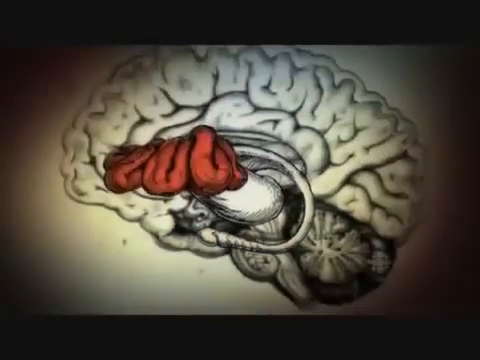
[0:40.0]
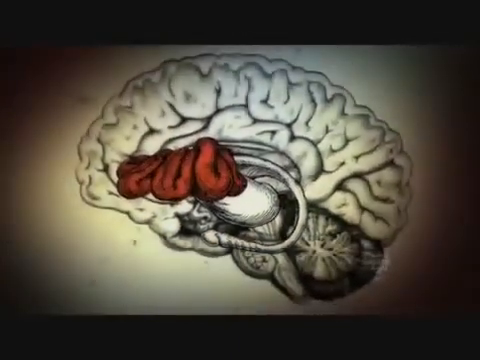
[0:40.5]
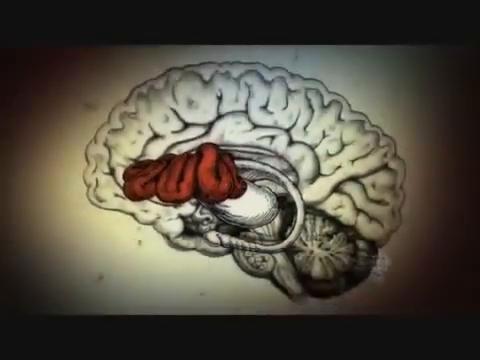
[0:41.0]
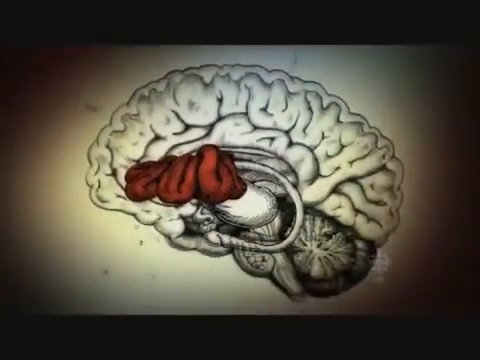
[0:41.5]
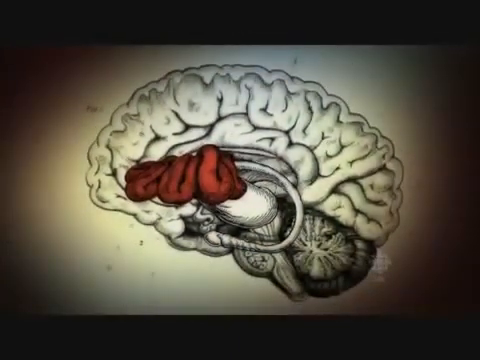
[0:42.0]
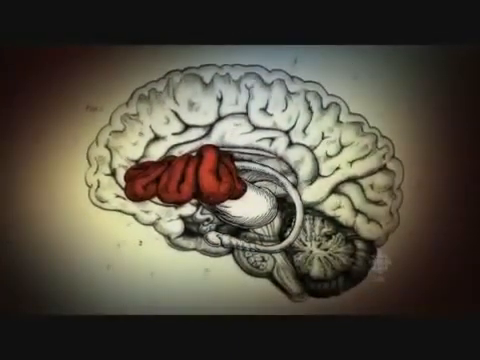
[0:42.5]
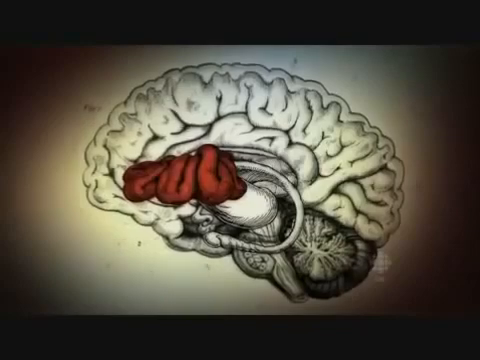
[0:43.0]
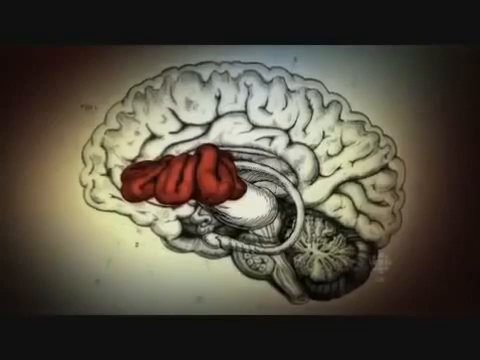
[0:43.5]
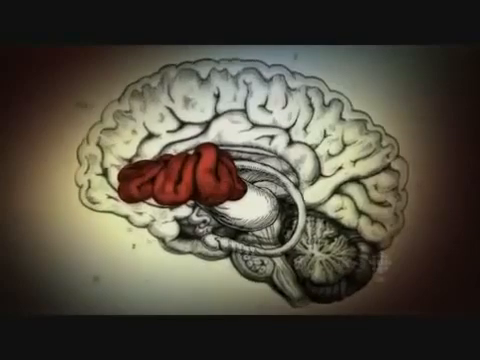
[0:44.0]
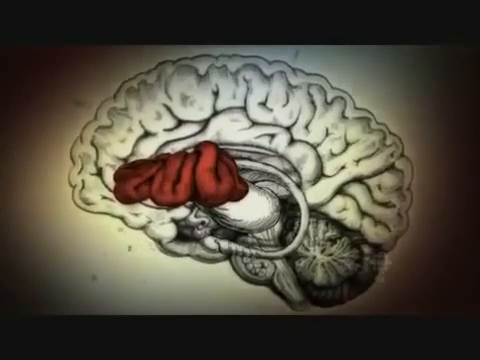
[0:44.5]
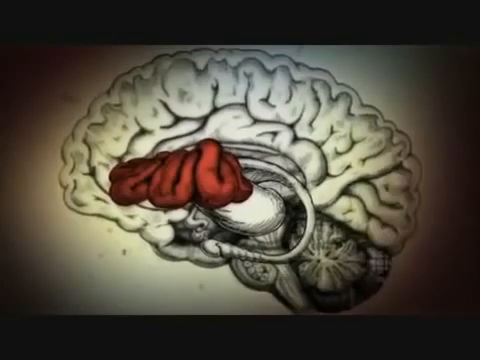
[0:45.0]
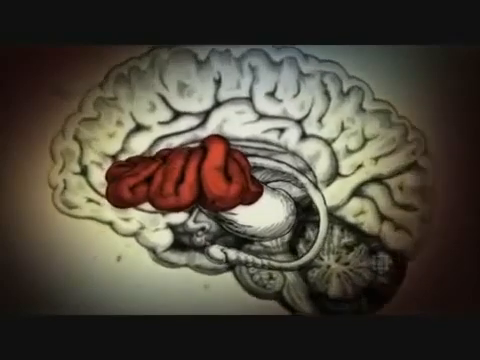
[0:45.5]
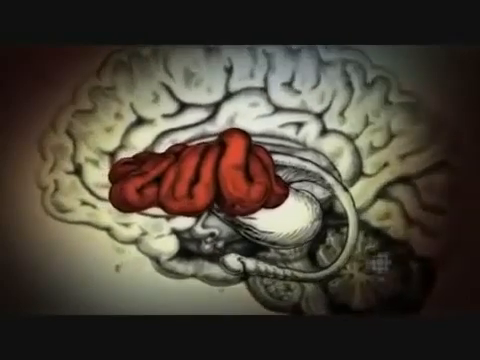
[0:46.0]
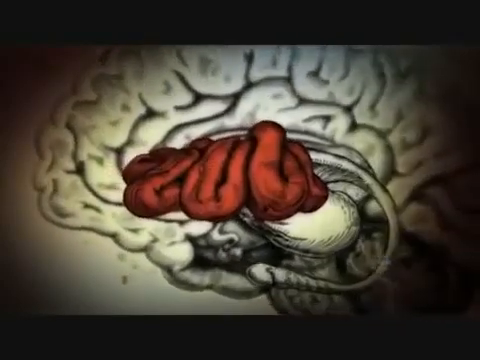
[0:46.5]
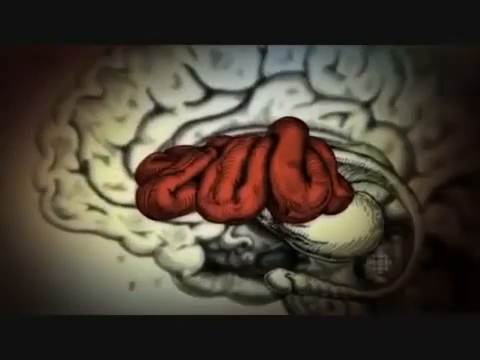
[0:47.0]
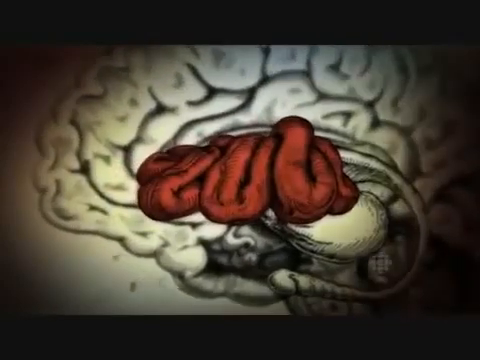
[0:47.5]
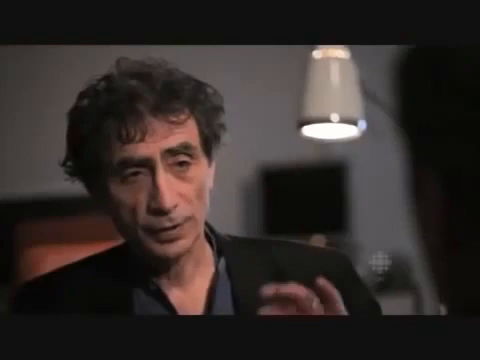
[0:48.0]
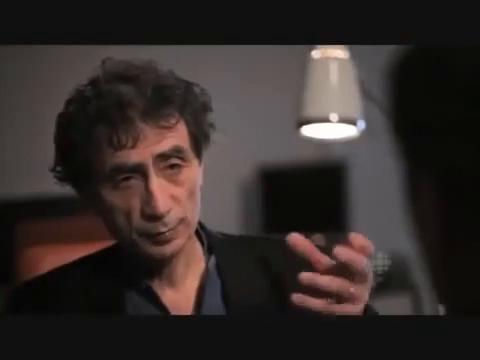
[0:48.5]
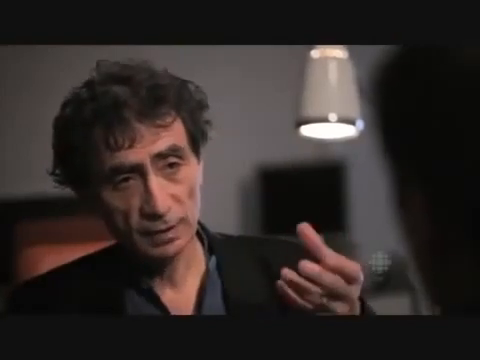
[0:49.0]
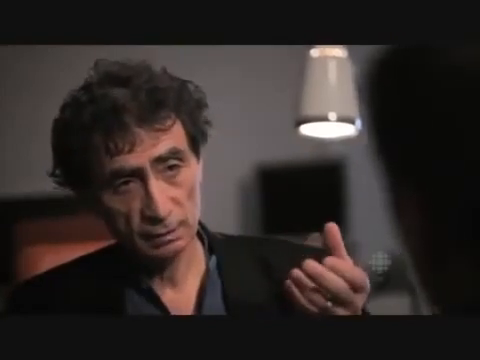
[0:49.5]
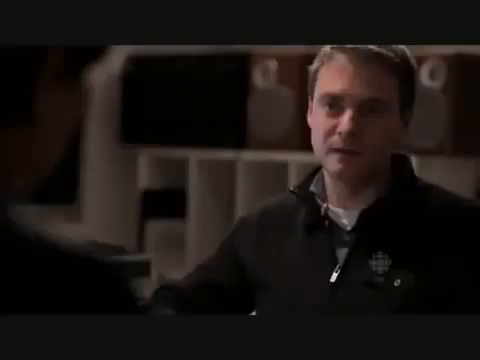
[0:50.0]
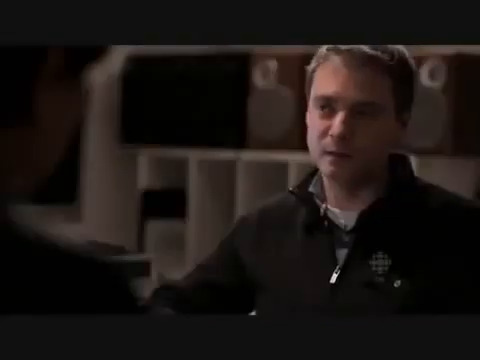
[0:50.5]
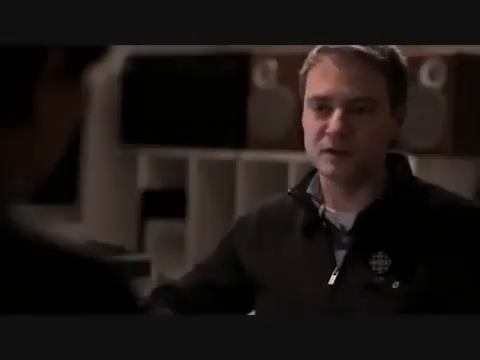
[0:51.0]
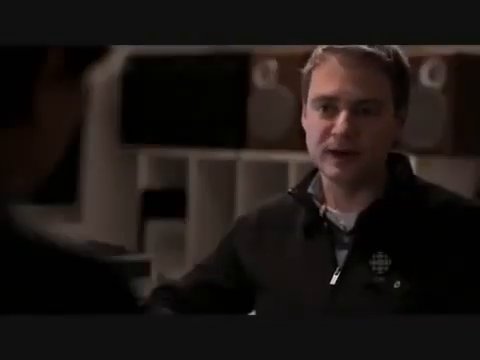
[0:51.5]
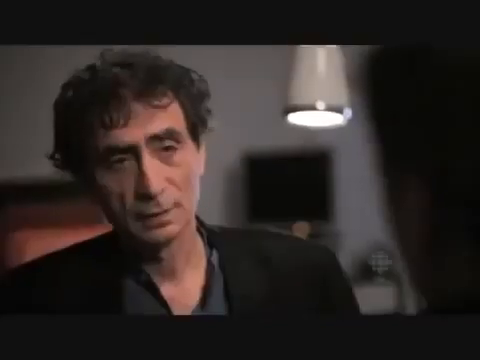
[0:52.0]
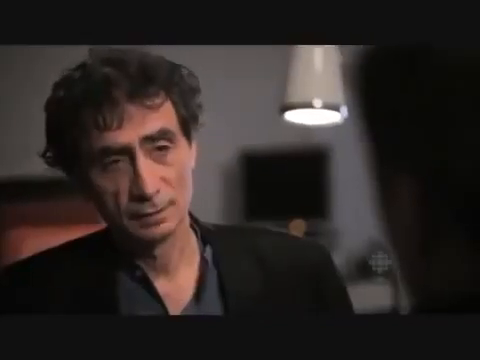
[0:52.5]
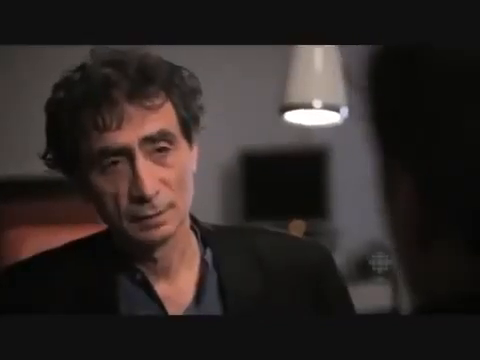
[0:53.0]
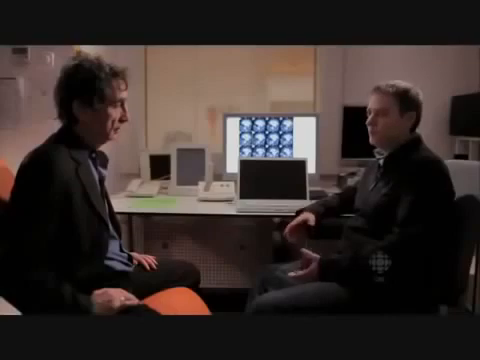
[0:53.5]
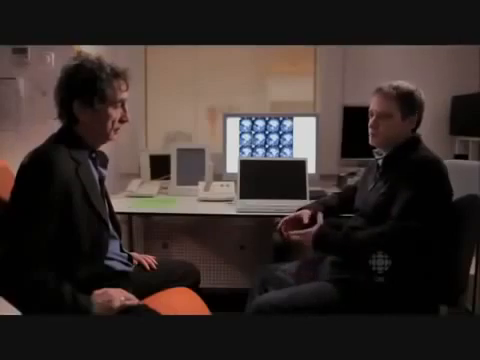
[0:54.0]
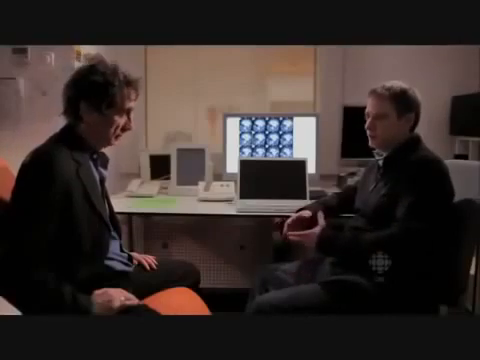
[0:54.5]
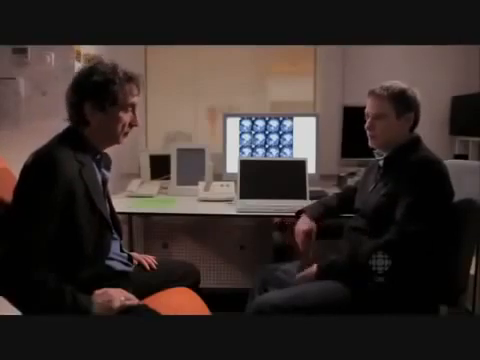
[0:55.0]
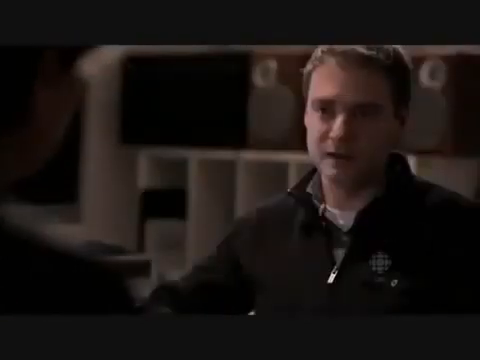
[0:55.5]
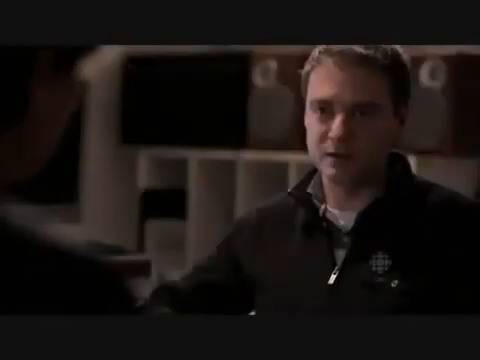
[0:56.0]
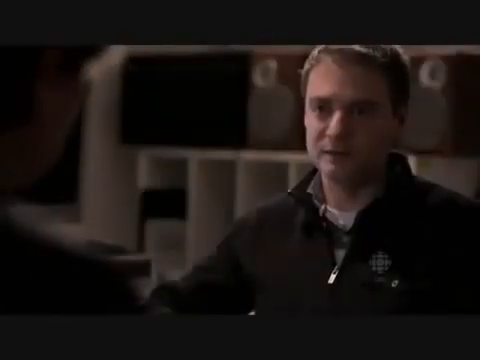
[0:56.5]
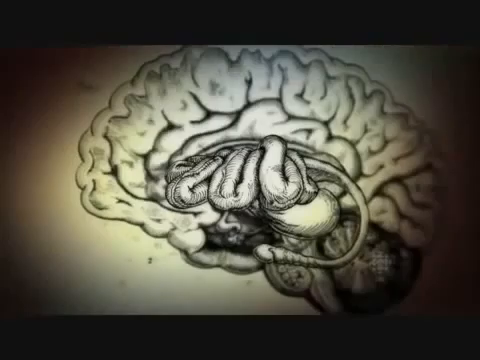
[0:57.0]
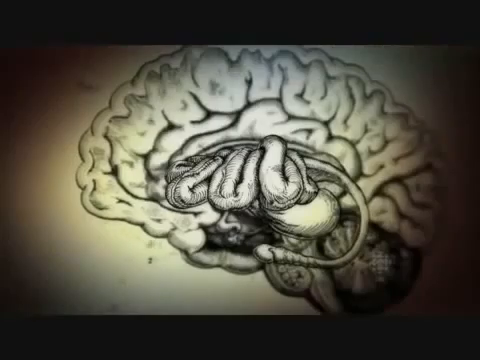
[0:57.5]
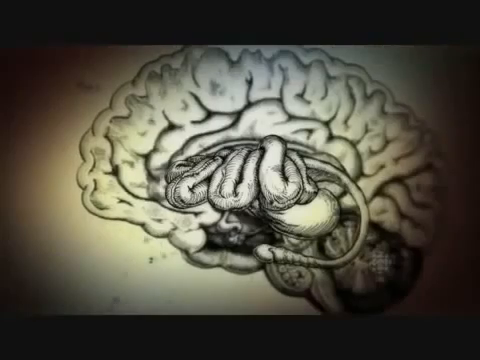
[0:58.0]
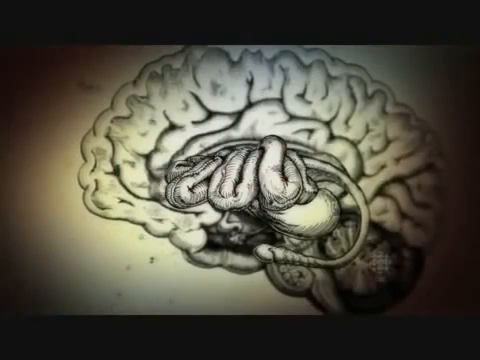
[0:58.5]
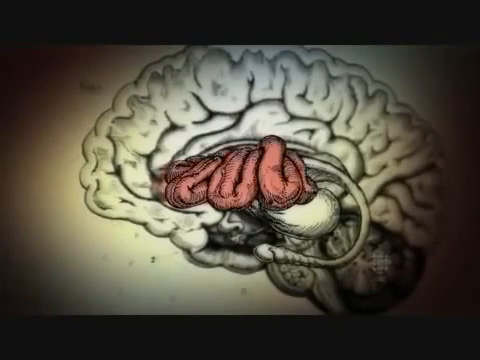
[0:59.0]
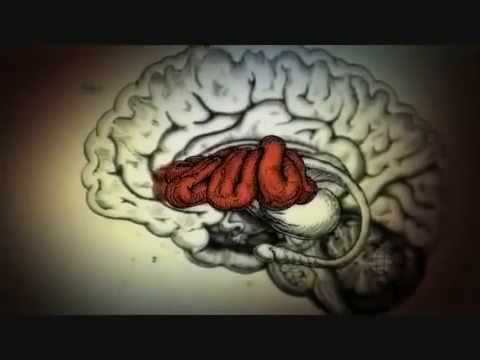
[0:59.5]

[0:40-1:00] The view backs away from the side view of the brain, showing the red spot in the center and to the left side. The view then zooms in and goes to the left side, with the red part still visible within the brain. The scene changes to a man being interviewed. He is sitting down, wearing what looks like a black jacket, and has black, medium-length, curly to wavy hair. Another, younger man is to the right side, whom the first man is talking to. The view returns to the first man, who looks older than the other man. Both men are then shown sitting down facing each other, the older man on the left and the other man on the right, who is talking and has his hands up. A view of the younger man follows; he is wearing some sort of black fleece. The scene then changes to the side view of the black and white image of the brain, with the red colored part in the middle.